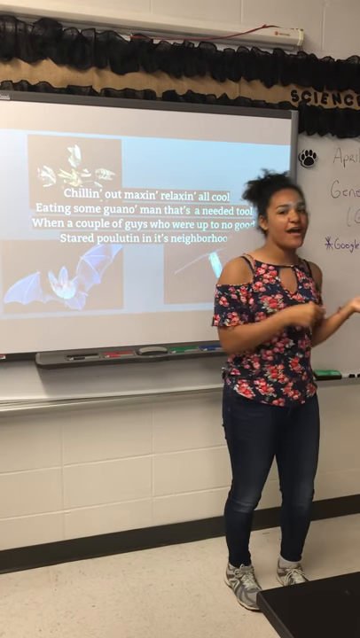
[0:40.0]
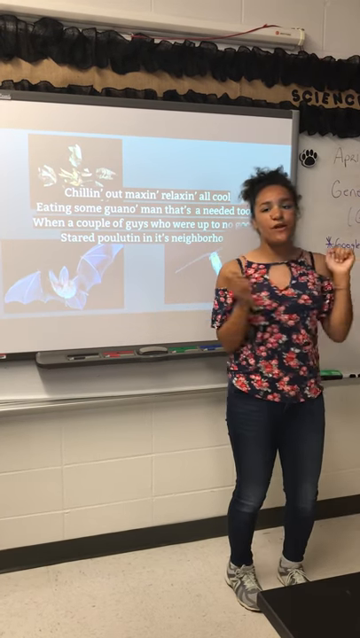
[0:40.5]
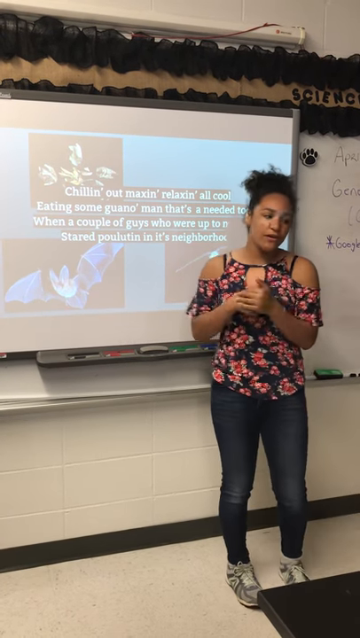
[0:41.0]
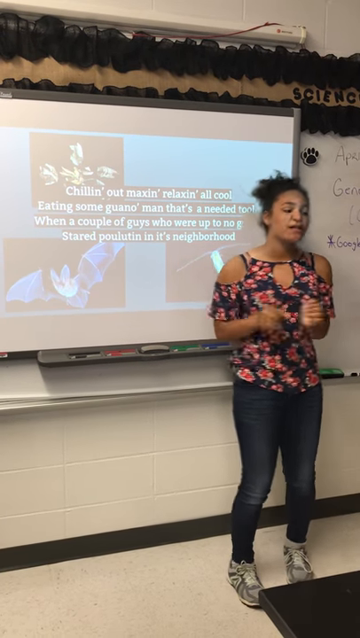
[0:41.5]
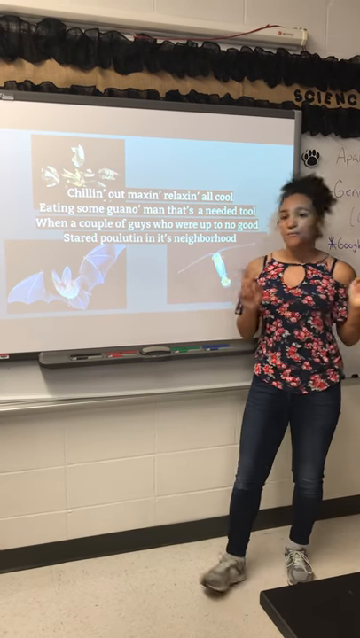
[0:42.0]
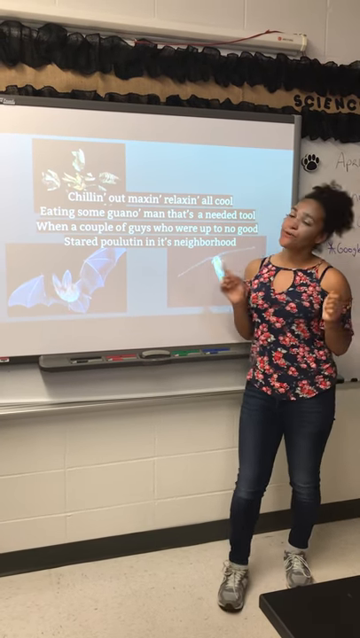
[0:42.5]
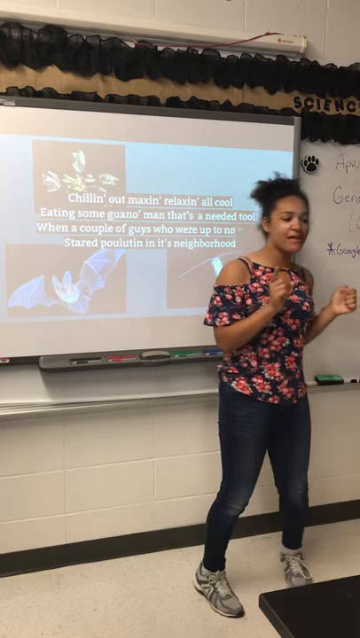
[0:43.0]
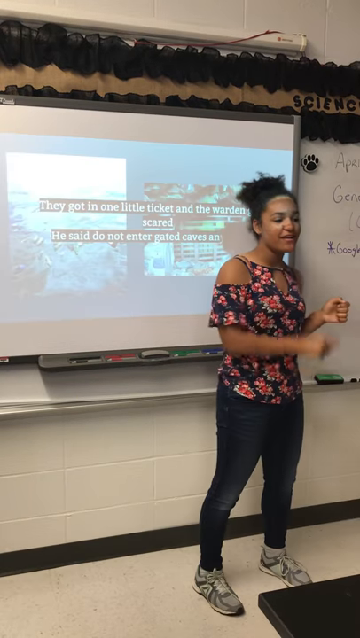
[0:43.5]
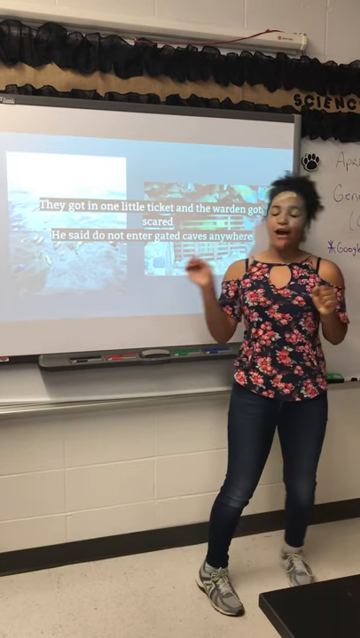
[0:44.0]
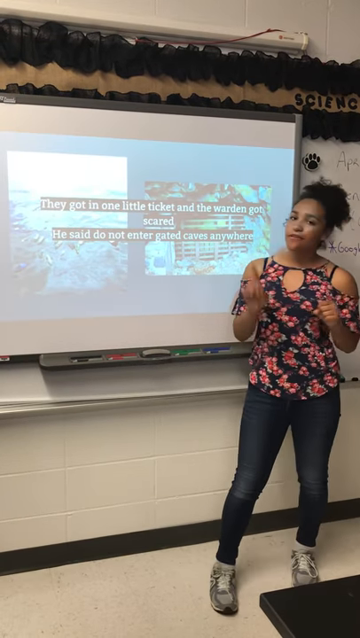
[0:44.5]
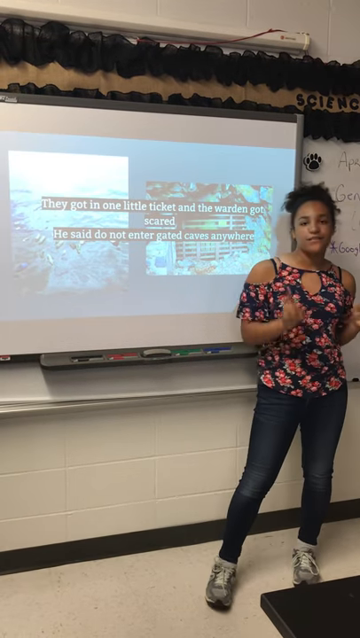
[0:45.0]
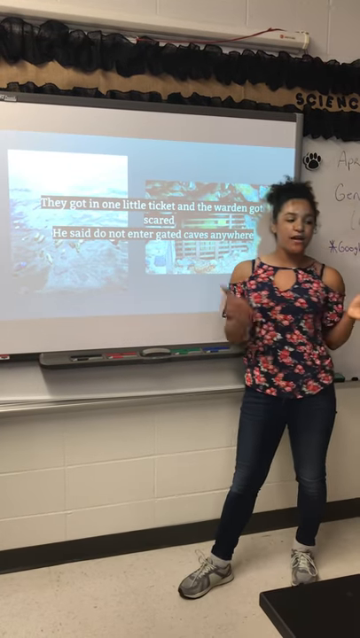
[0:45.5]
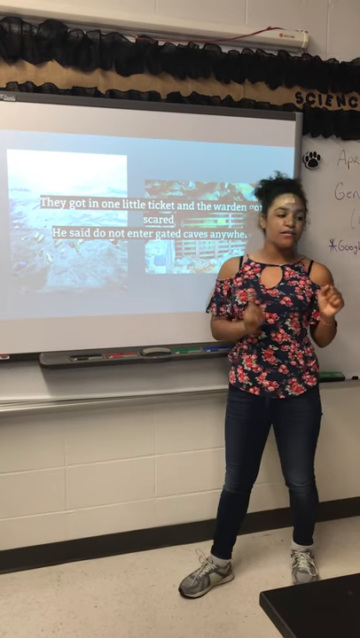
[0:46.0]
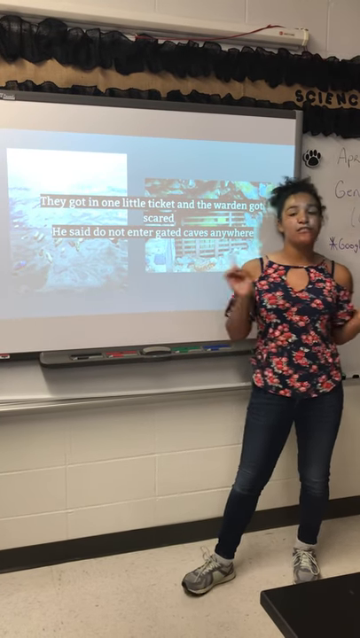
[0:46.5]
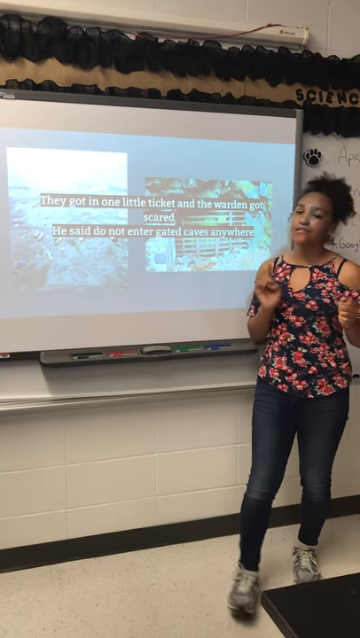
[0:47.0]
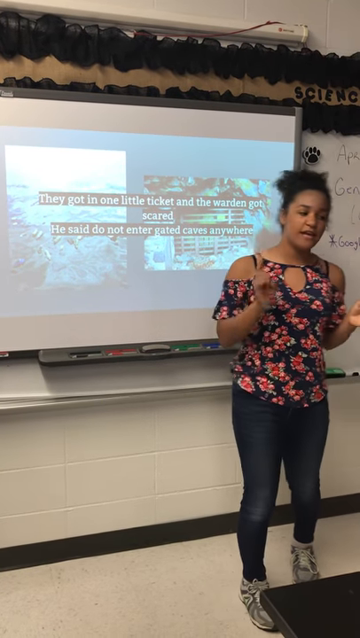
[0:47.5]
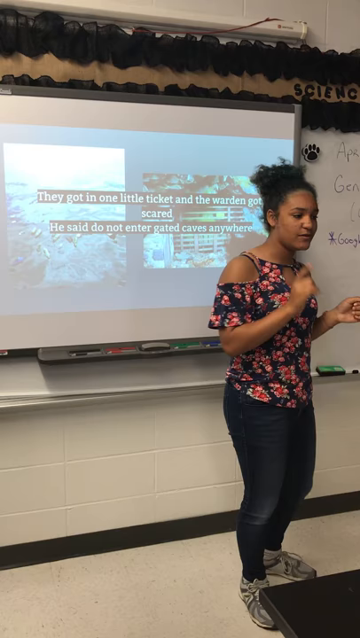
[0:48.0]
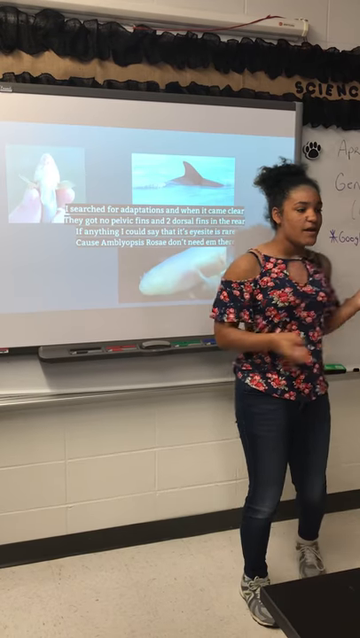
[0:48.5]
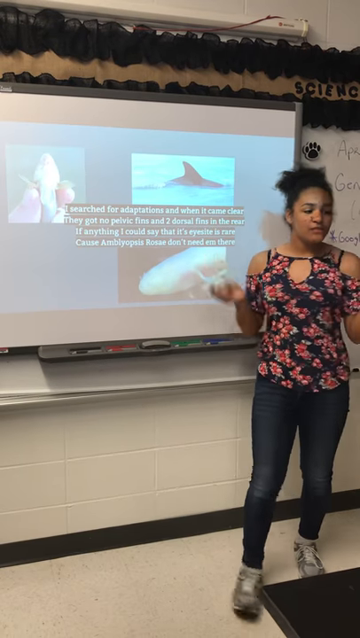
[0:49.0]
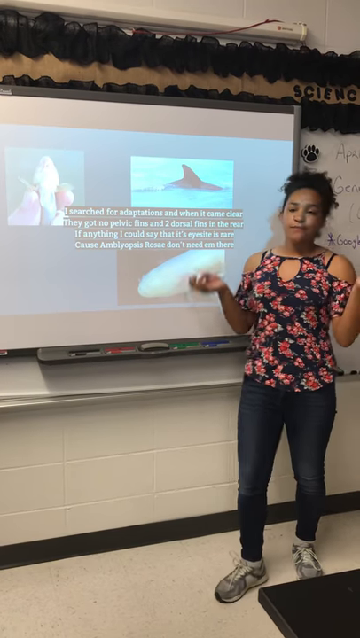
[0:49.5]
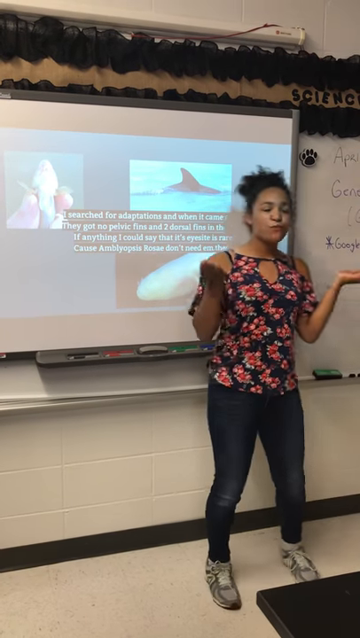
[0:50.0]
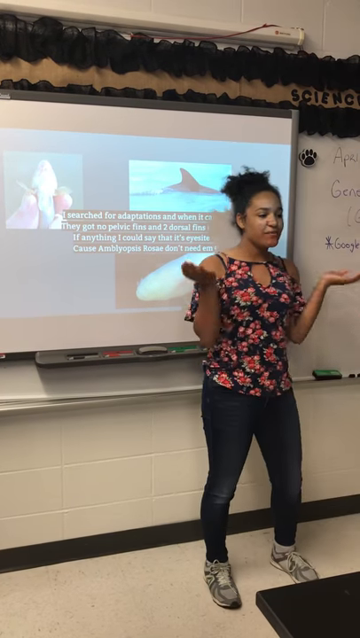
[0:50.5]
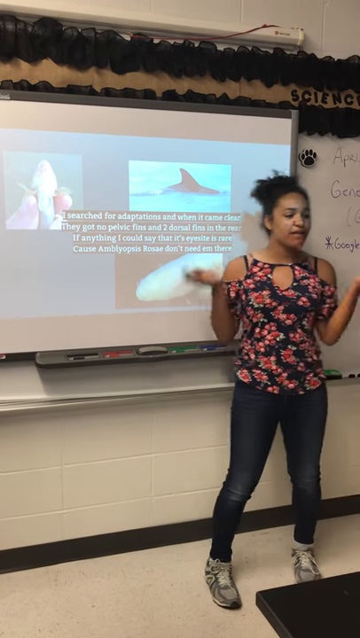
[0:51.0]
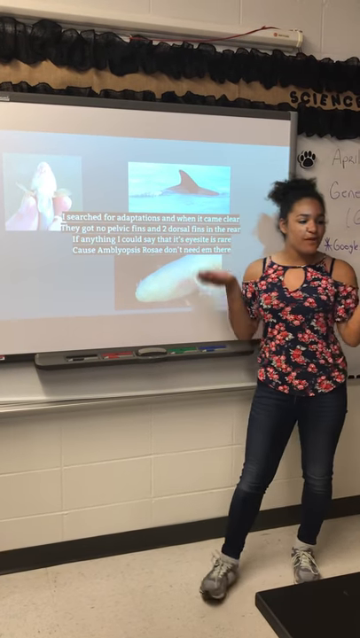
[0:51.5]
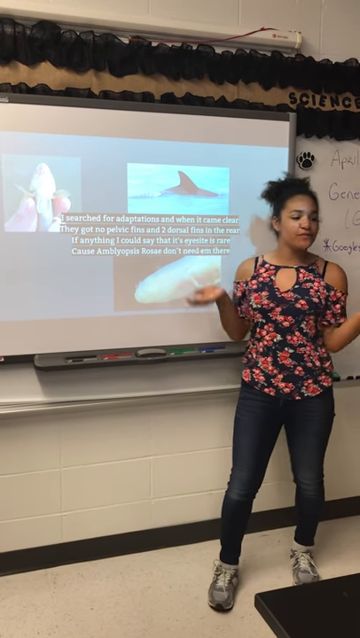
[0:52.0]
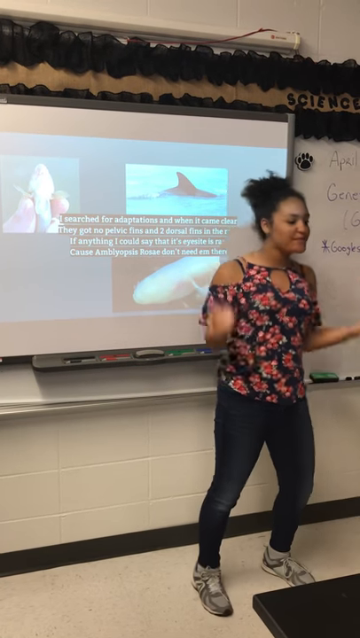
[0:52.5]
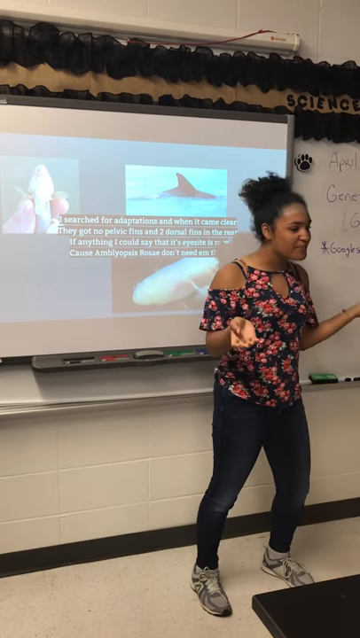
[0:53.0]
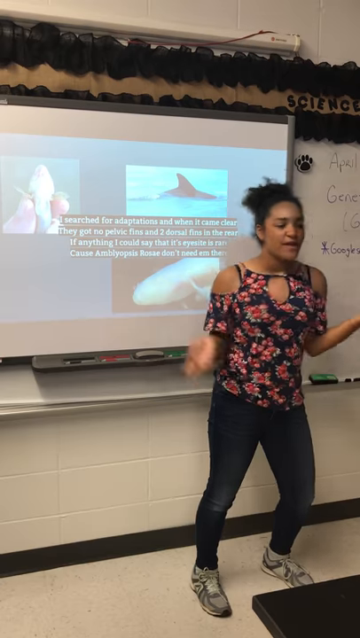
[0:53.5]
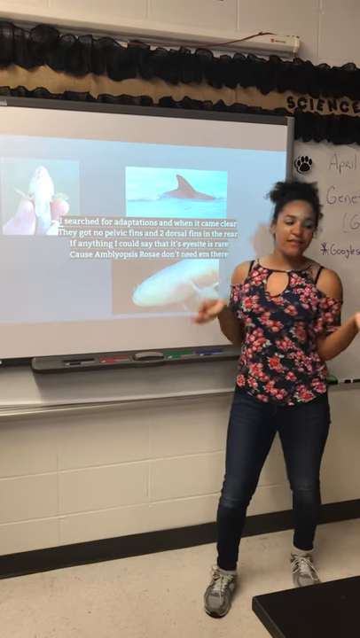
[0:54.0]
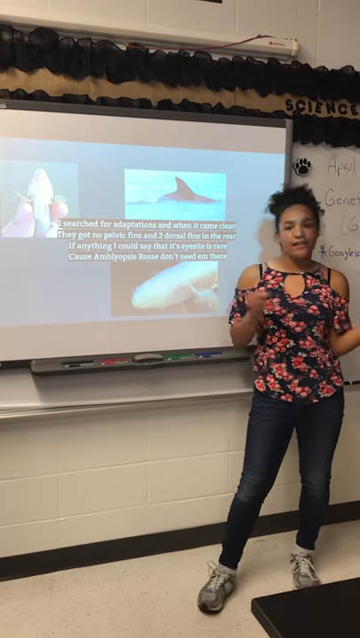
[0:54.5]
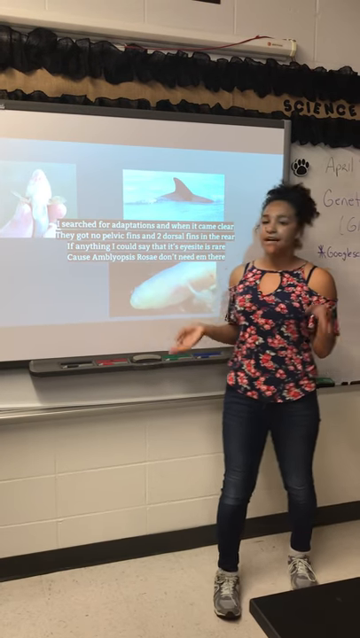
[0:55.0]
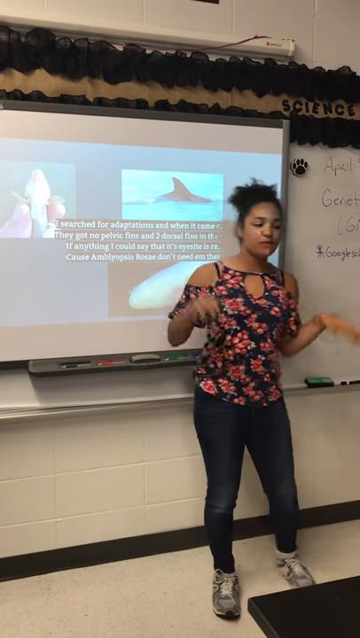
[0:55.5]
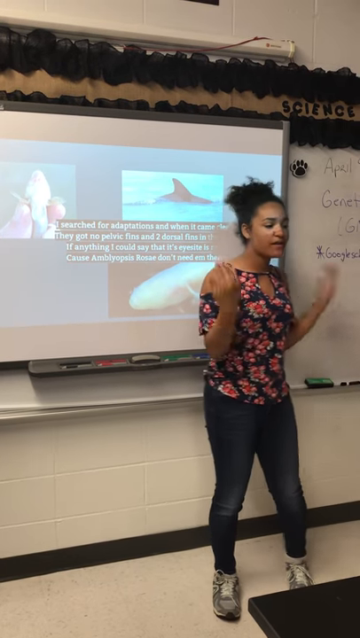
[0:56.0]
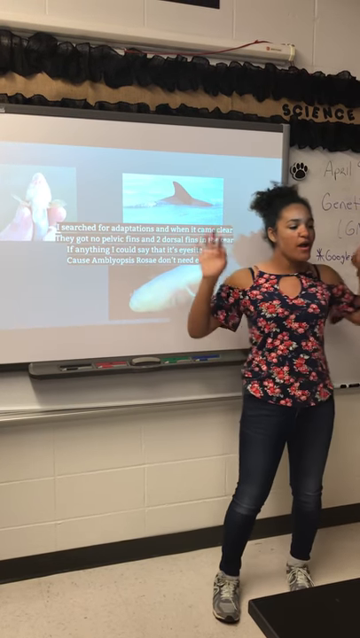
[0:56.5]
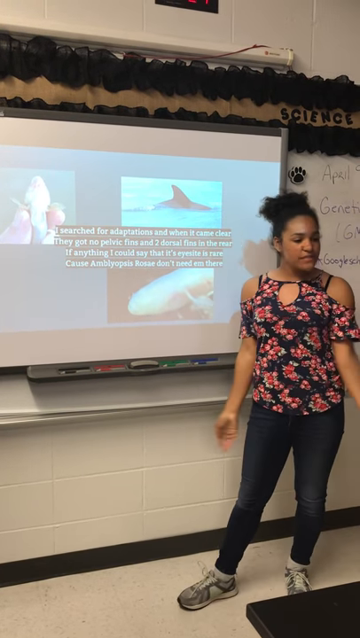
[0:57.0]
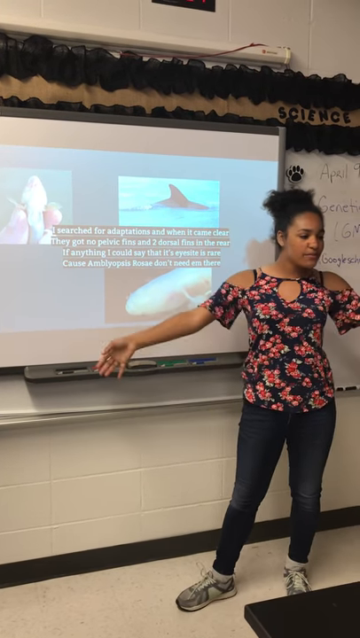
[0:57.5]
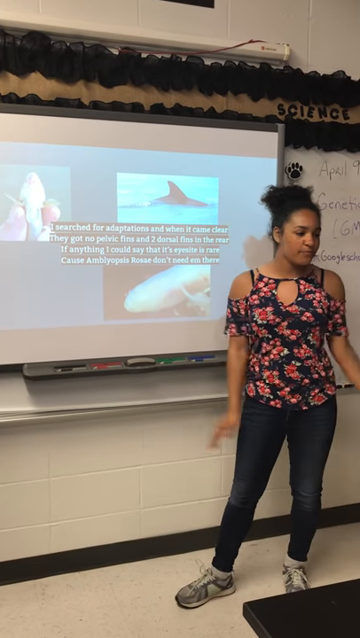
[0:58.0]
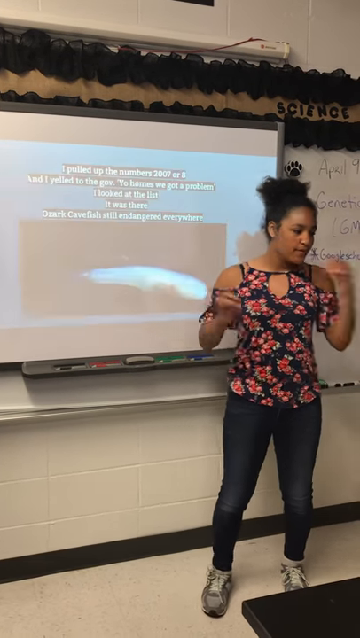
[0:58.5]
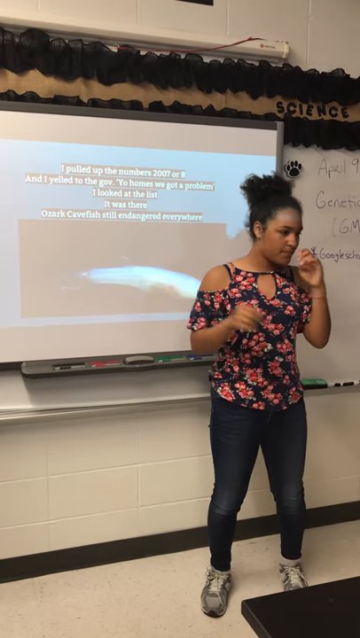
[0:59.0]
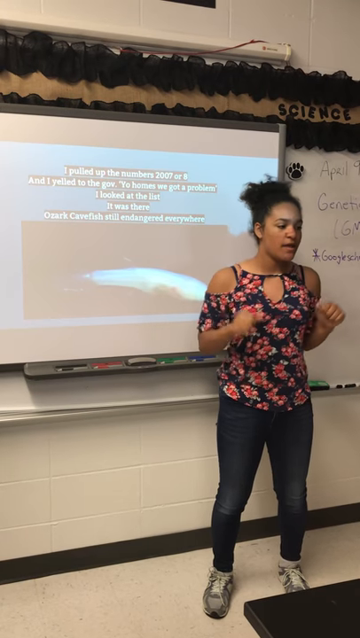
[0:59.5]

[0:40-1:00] The teacher continues dancing, moving her hands from side to side as the song continues, now about some kind of fish with fins and dorsals, and then about bats and some kind of shark. She sings the song and dances with her arms swaying from side to side, appearing extremely enthusiastic. She is still in the classroom, a teacher of African descent in a shirt with flowers on it, jeans, and sneakers. The wall still says "science", and with the class covering GMOs it is apparently biology, likely at a middle school or high school. She is still the only person in the frame and looks to be in her mid-30s.